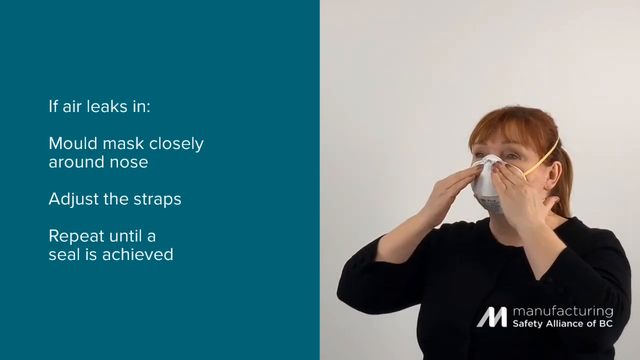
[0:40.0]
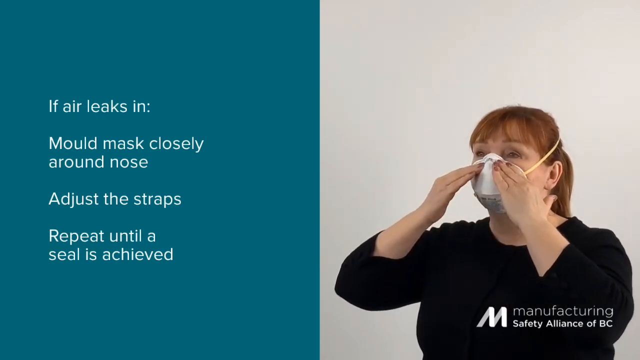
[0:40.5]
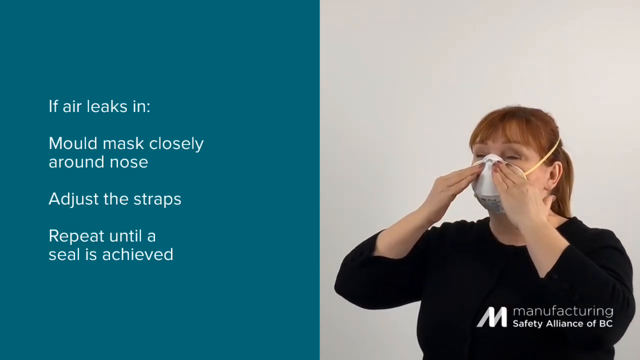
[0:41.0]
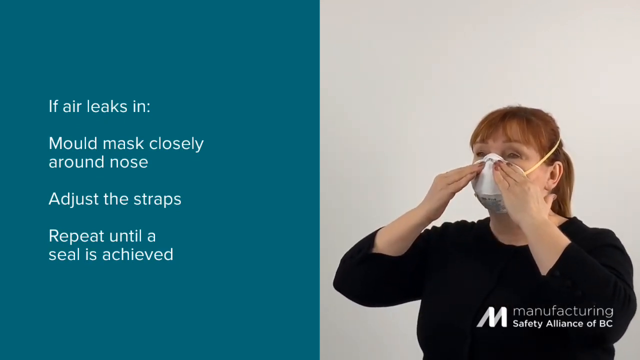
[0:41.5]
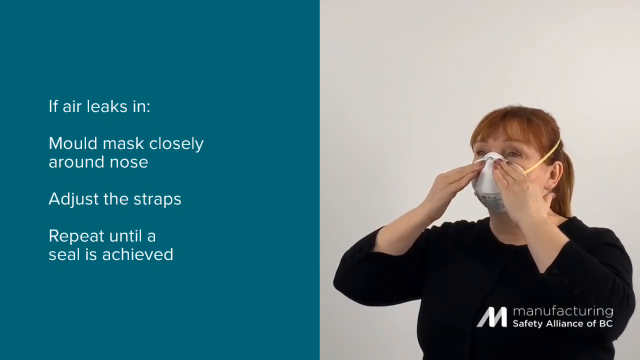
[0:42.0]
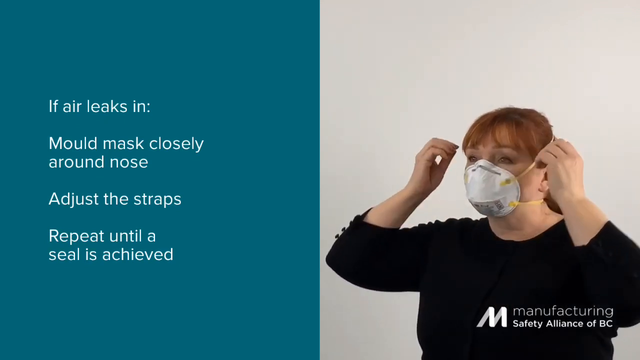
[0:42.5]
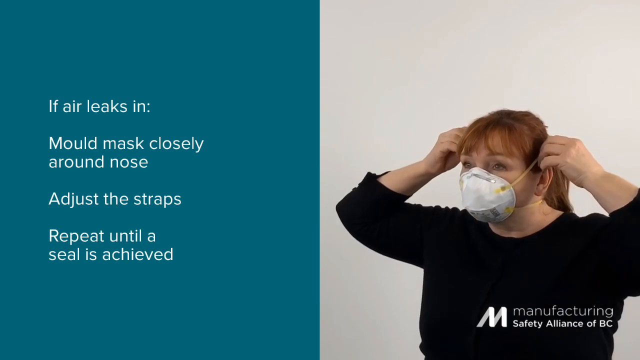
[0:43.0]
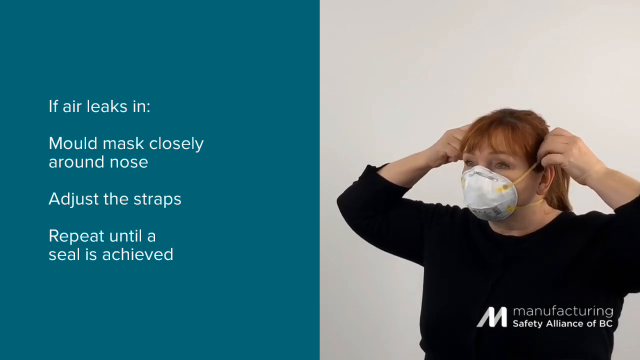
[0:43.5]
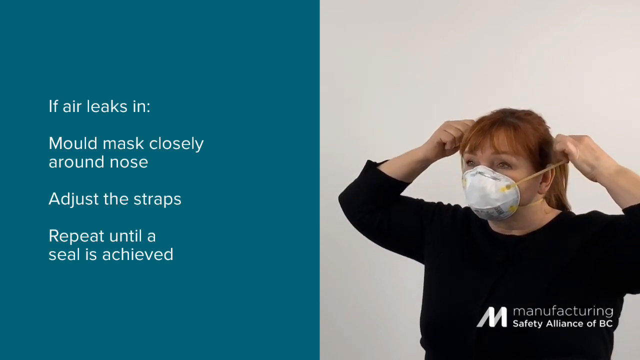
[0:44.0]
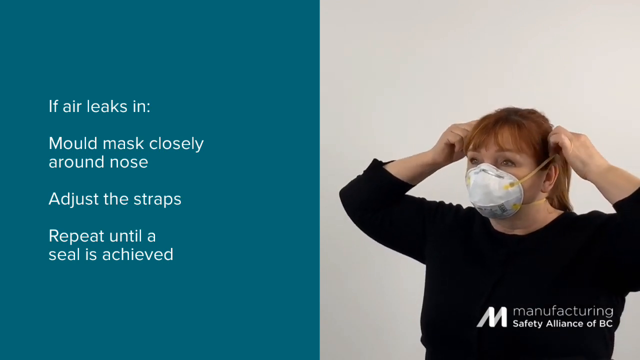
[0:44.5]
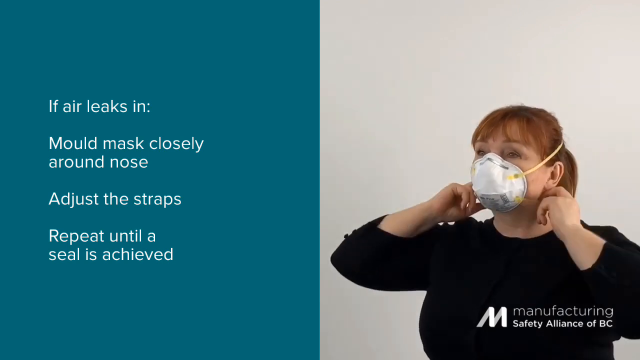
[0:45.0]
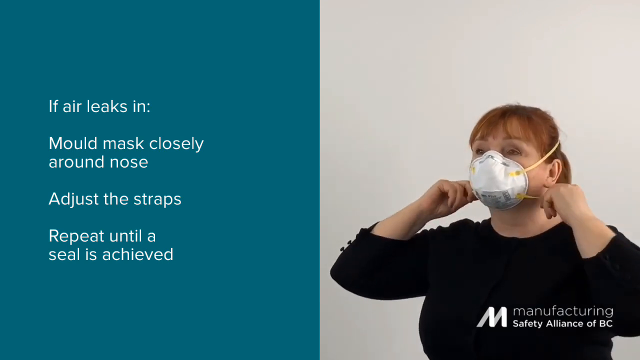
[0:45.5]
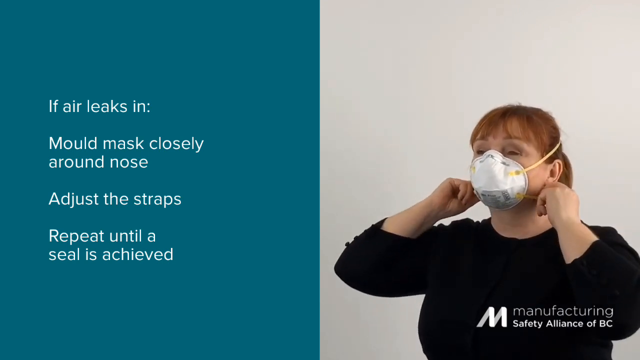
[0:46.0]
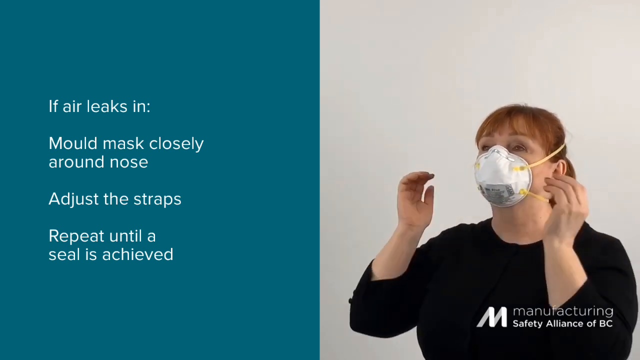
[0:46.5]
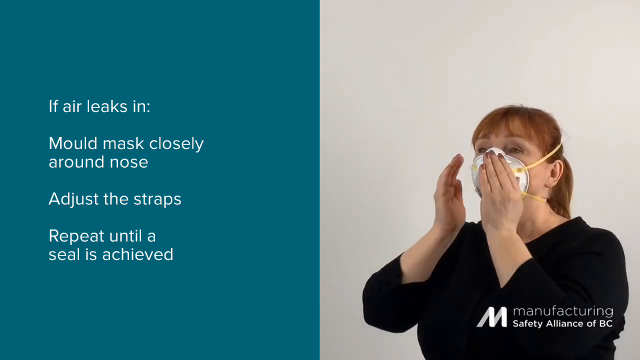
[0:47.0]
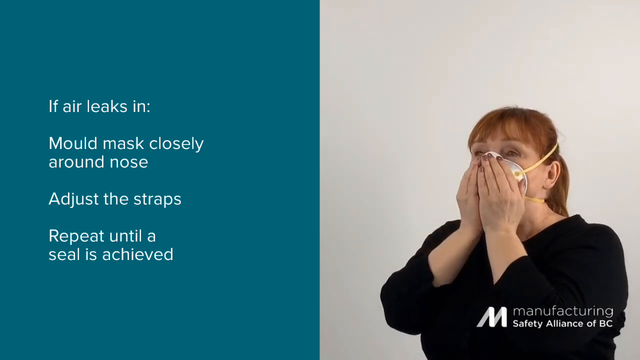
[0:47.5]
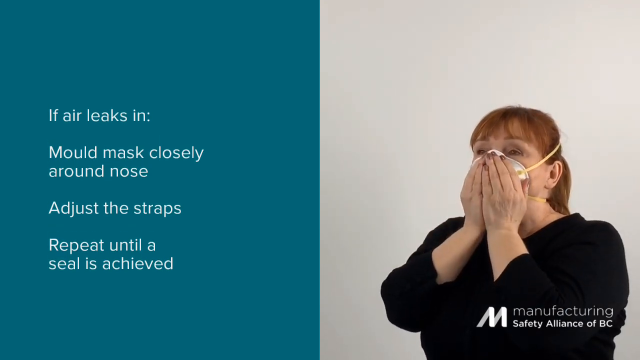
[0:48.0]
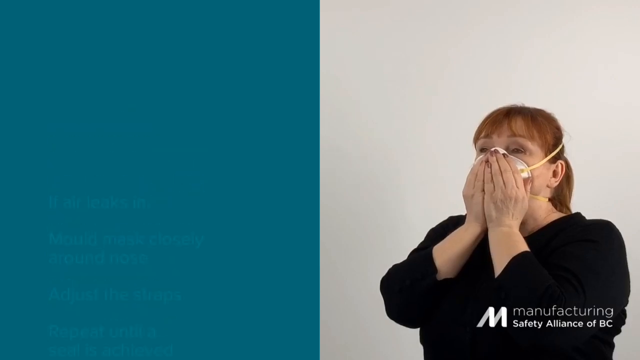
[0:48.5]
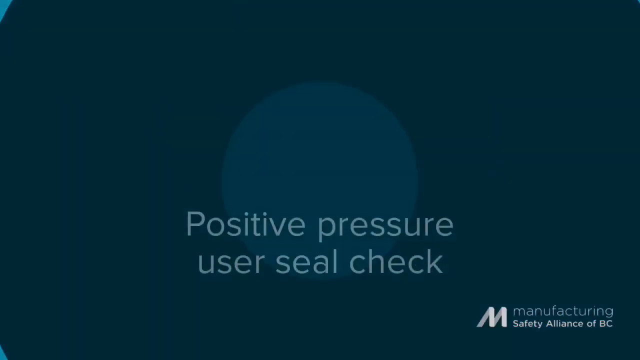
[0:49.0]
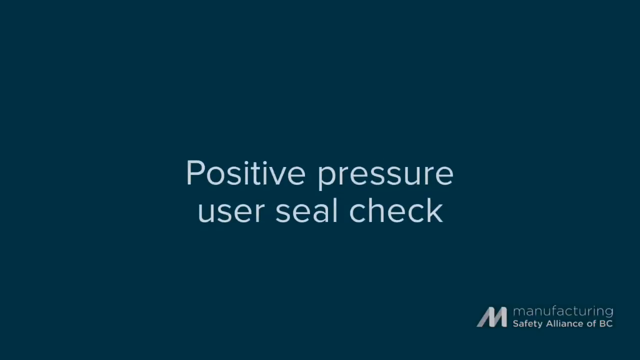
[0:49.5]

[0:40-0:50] On the left side of the split screen, the text reads "If air leaks in, mold mask closely around nose. Adjust the straps. Repeat until seal is achieved." On the right, the female instructor adjusts the straps of her mask, snugging them up and pulling the mask slightly tighter against her face. She covers the mask again with both hands and lightly breathes in for a negative pressure test. She then positions the nose clip, putting one hand on each side of her nose below each eye, while the text on the green background on the left continues: "If air leaks in, mold mask closely around nose. Adjust the straps. Repeat until a seal is achieved." The screen then changes to a very dark gray background with lighter-colored text across it reading "Positive pressure user seal check."